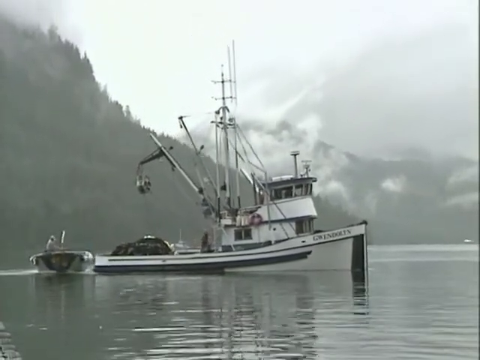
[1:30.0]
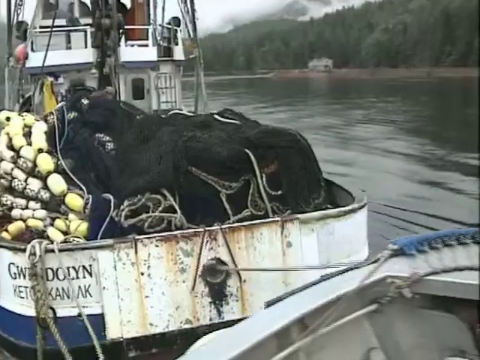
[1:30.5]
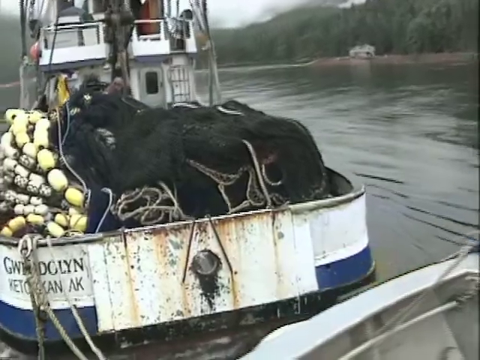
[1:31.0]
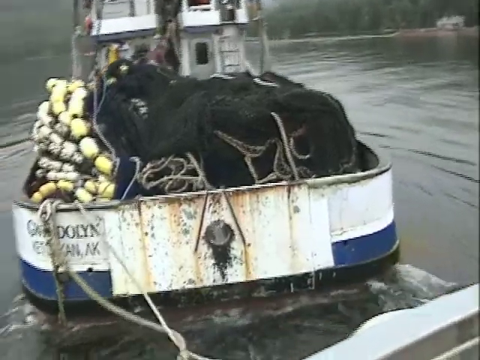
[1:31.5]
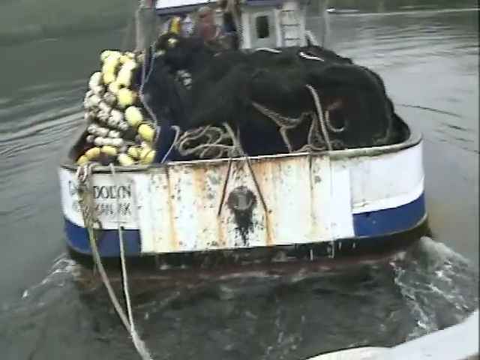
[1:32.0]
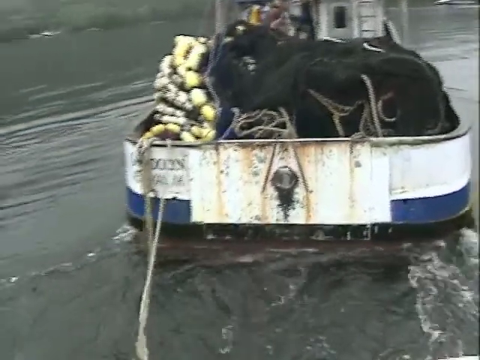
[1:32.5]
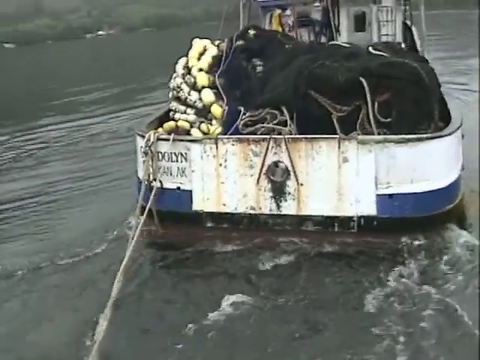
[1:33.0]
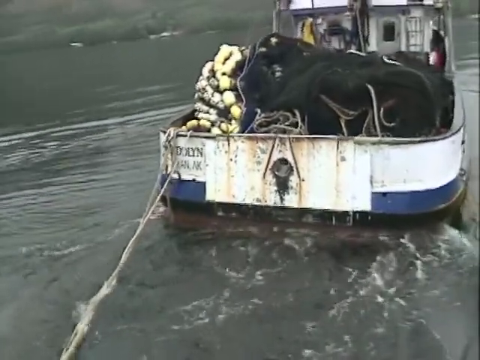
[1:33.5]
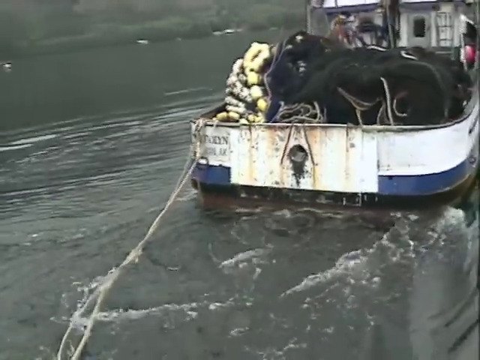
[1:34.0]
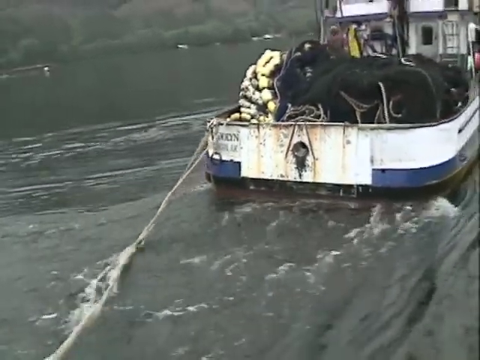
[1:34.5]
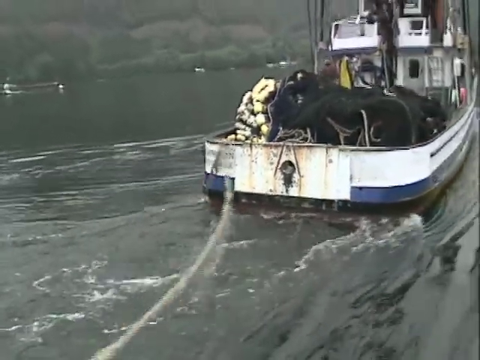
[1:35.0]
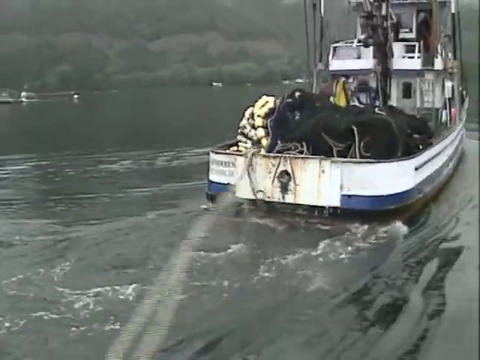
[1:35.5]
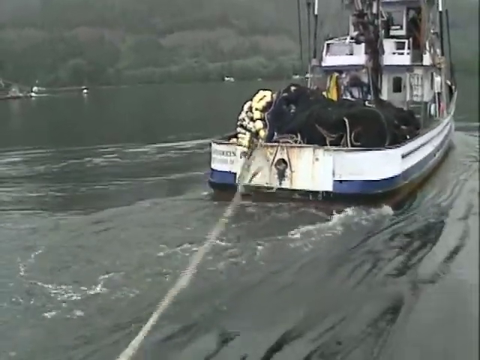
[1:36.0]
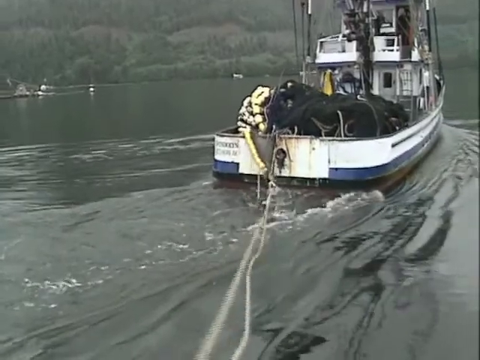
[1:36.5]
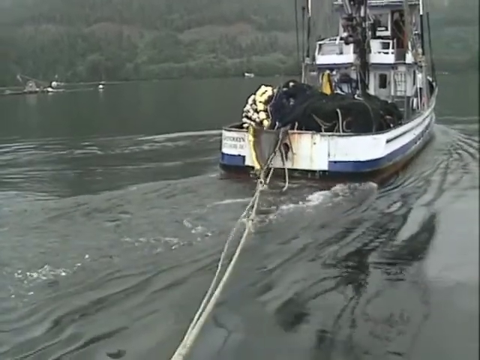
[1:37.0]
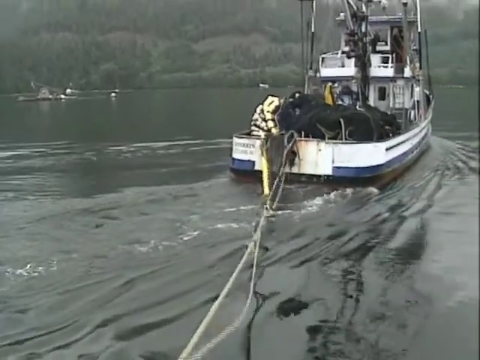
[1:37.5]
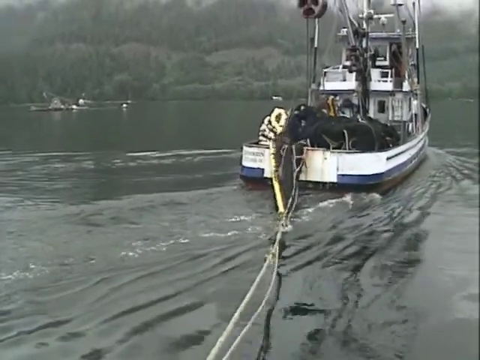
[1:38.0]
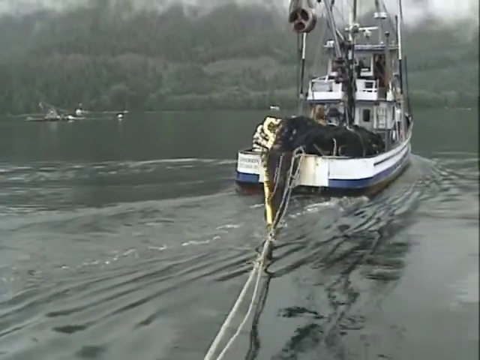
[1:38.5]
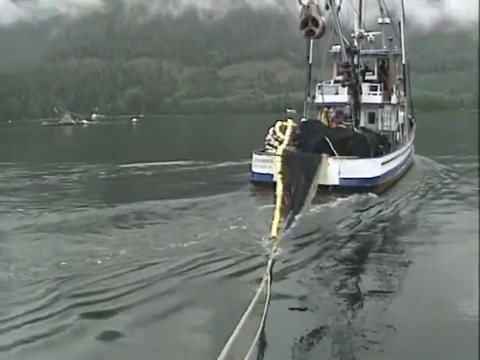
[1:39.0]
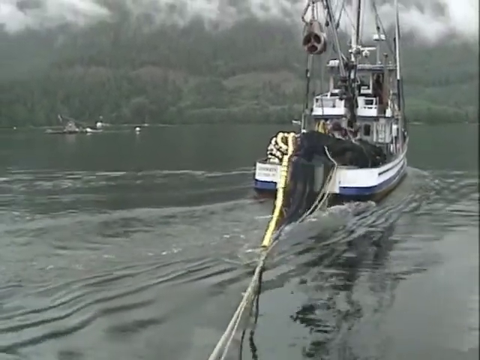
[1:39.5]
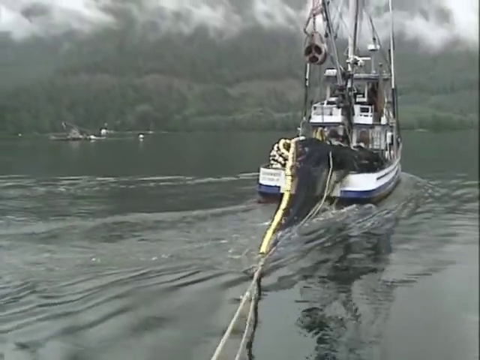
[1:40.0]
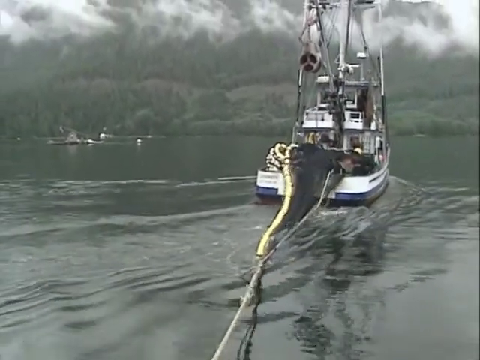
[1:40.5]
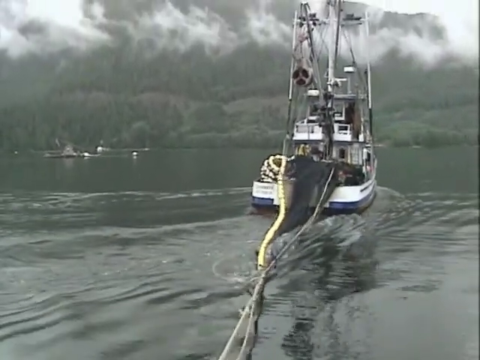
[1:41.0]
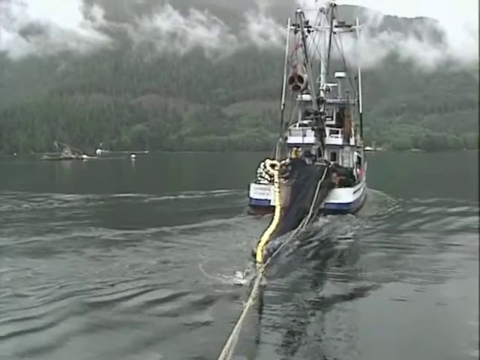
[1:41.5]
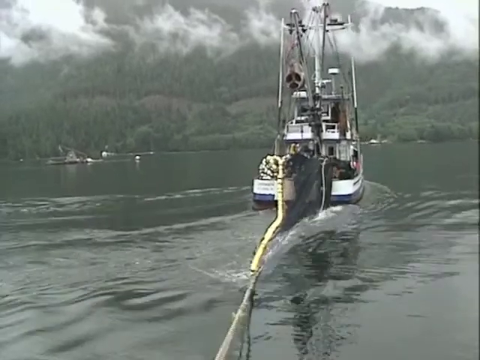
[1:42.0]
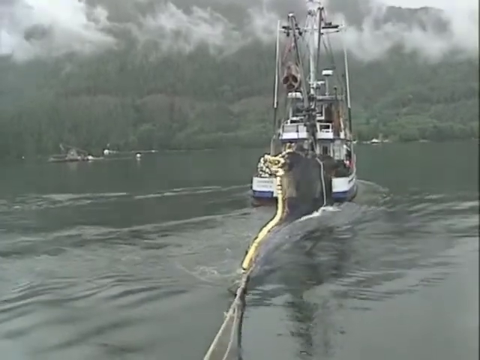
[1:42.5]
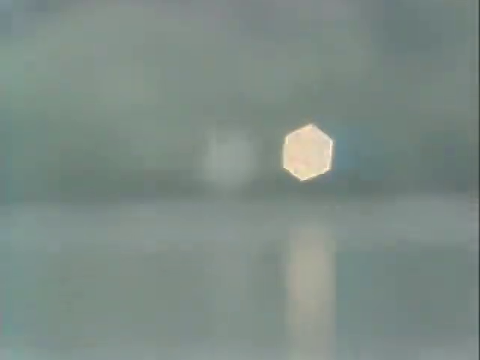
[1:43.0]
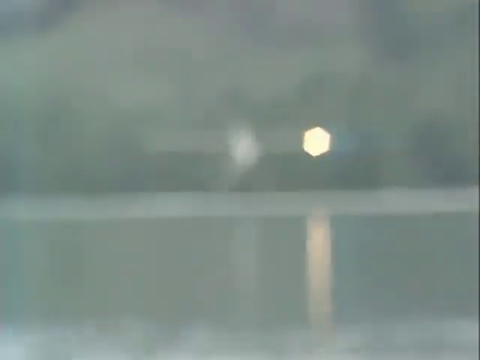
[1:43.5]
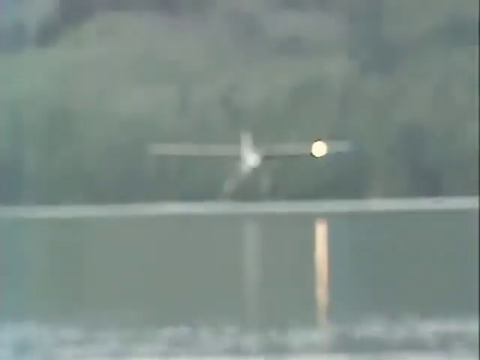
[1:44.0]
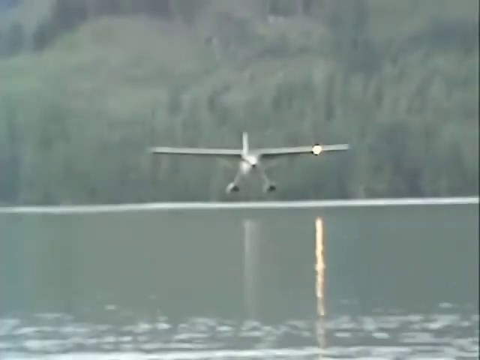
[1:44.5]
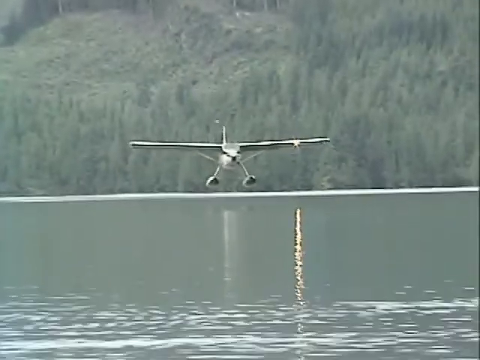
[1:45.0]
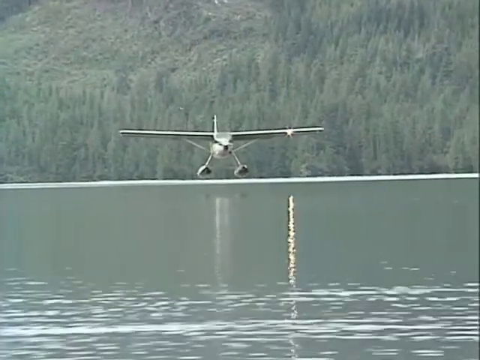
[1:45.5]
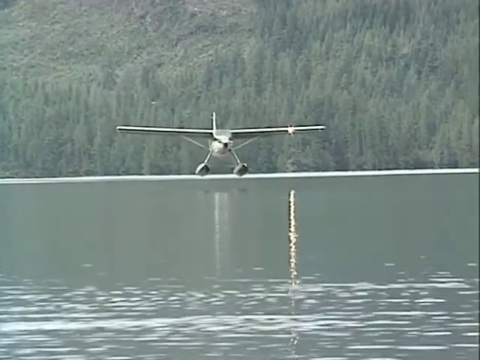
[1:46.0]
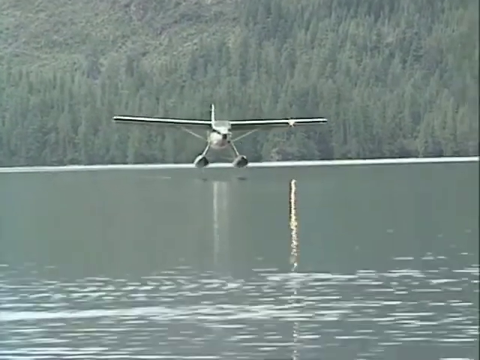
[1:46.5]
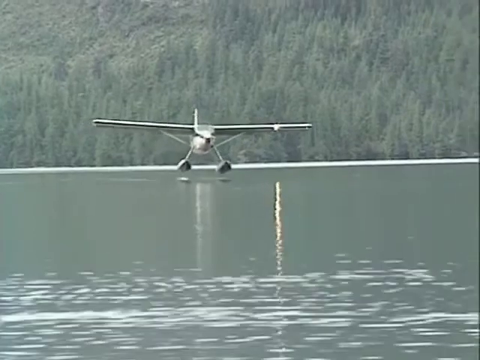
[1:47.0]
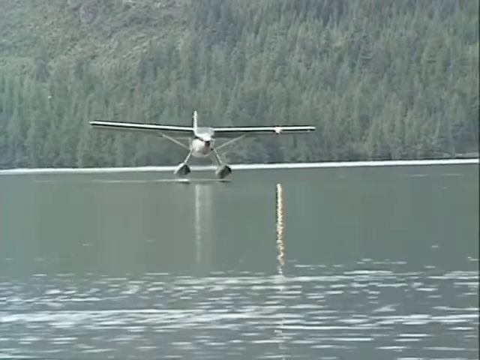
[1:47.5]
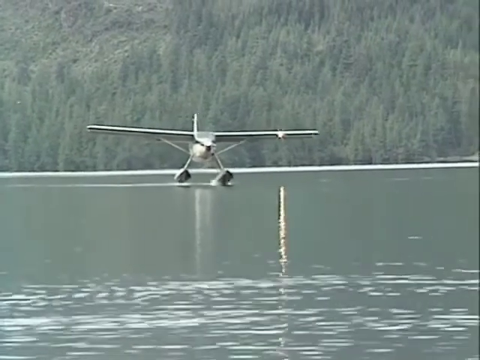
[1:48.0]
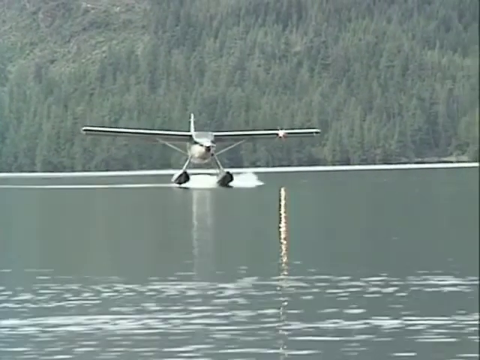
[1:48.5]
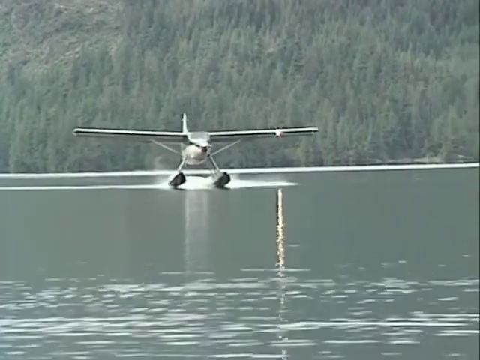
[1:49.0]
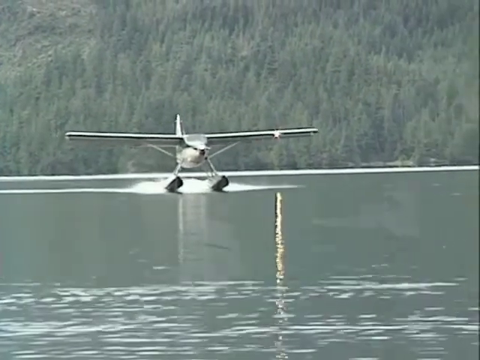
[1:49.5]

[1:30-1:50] A white boat with the name Gwendolyn on its front right side has a two-story structure near the front, with windows on the right side of each level and metal poles sticking up in the middle. In the background is a large hill with many trees, with smoke-like clouds rising above the trees, and the boat moves to the right. Next is a close-up of the back of a boat that appears to be the same boat, with the name Gwendolyn on its left side. The back of the boat is white, and above this white section is what looks like a large black net; on the left side are little cylinder buoys that appear to be yellow. A rope on the lower left side of the boat is in the water and appears to be attached to something off-camera near the bottom of the frame. The boat continues forward, pulling the rope, and as the rope stretches out, the net and buoys are pulled out into the water behind the Gwendolyn. In a different shot, a plane is seen from the front landing on the water: it hovers very slowly downward above the water before making contact, and the water splashes everywhere. A quick aerial shot then shows the plane from the upper left side.